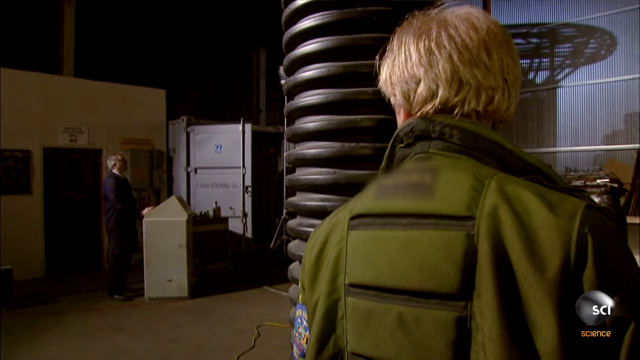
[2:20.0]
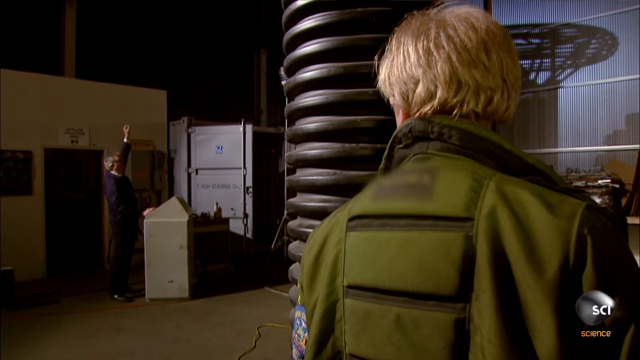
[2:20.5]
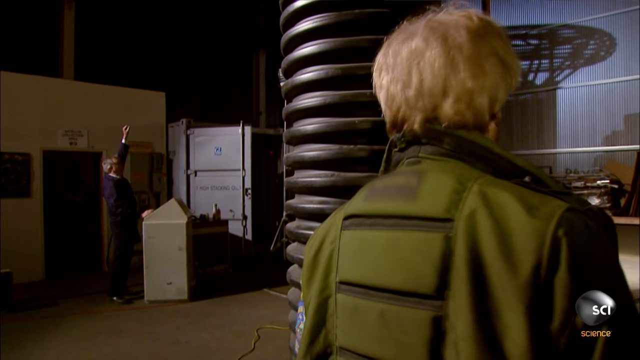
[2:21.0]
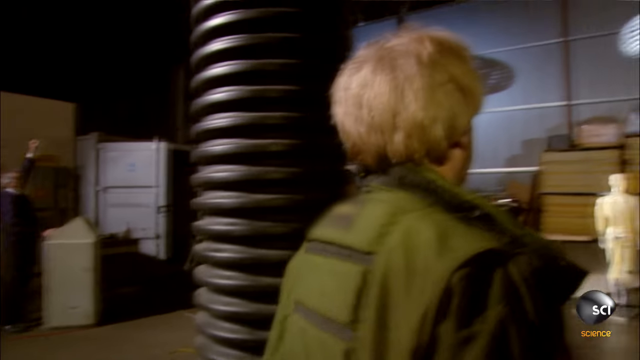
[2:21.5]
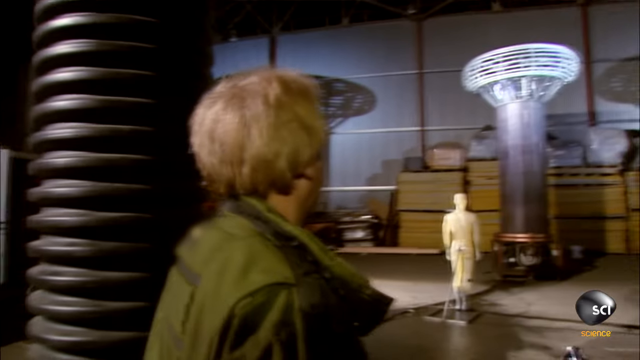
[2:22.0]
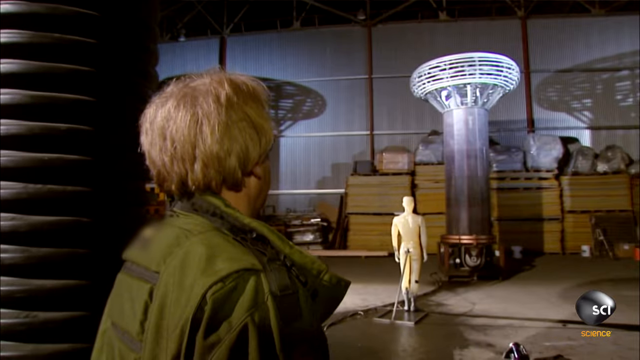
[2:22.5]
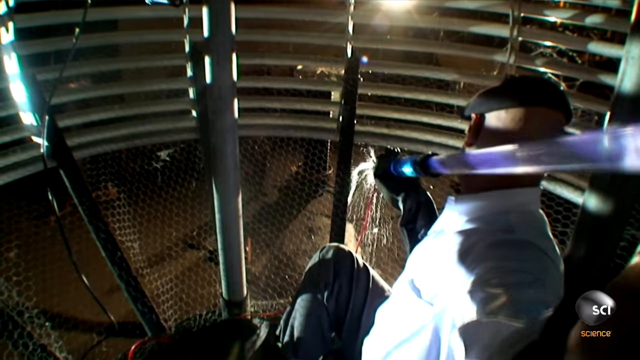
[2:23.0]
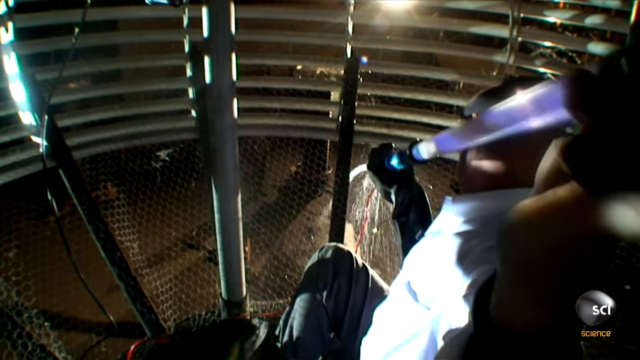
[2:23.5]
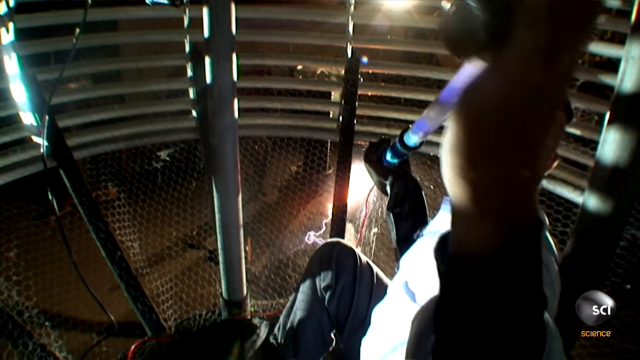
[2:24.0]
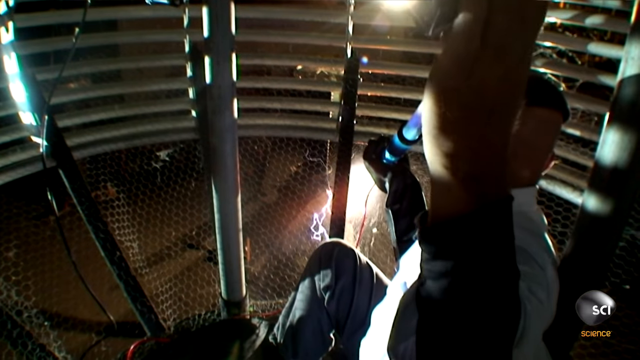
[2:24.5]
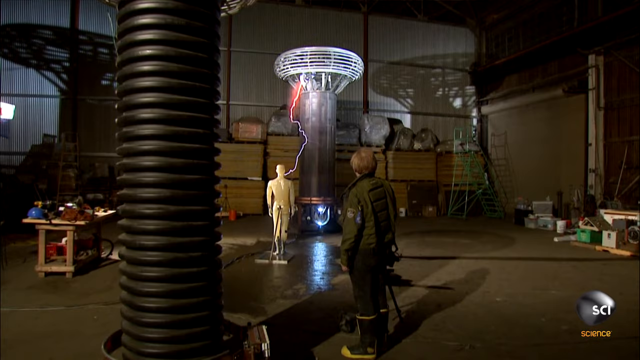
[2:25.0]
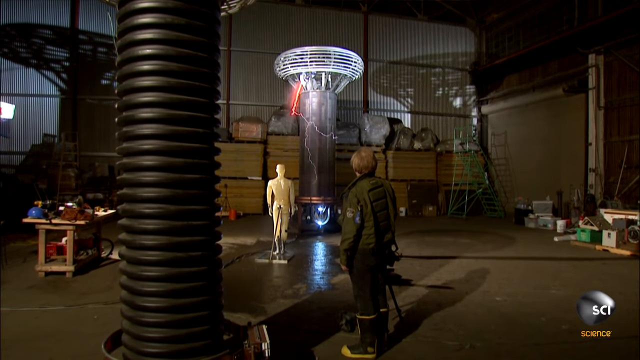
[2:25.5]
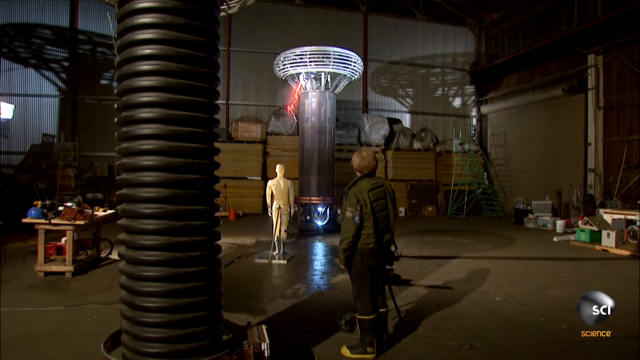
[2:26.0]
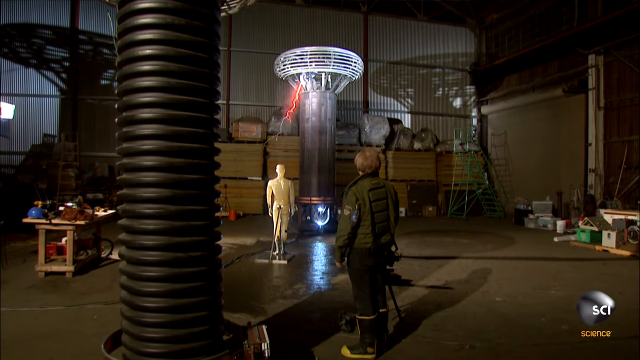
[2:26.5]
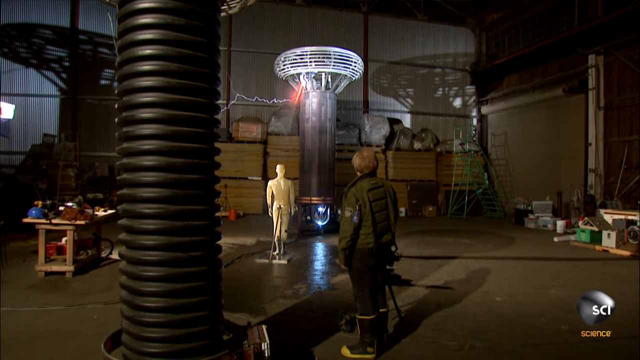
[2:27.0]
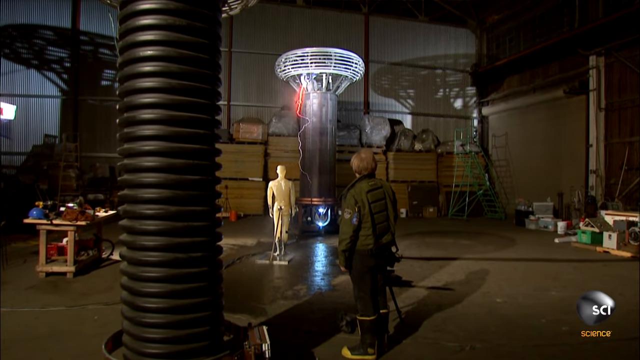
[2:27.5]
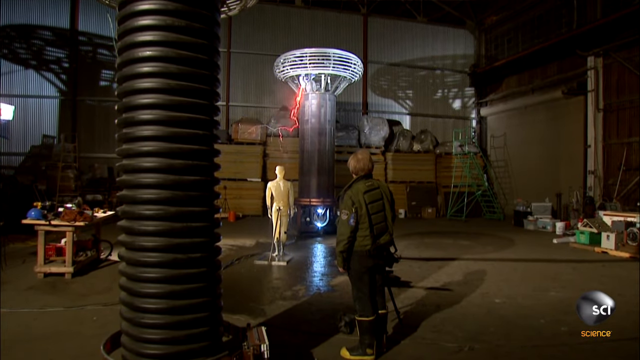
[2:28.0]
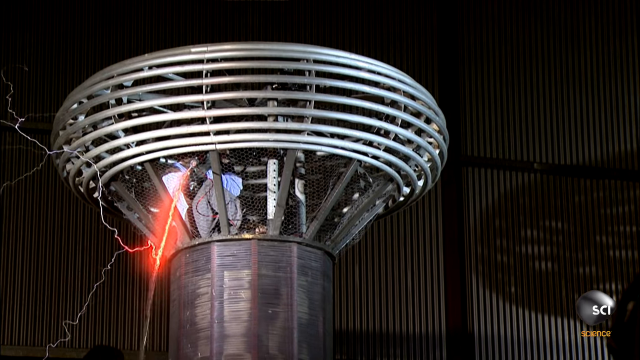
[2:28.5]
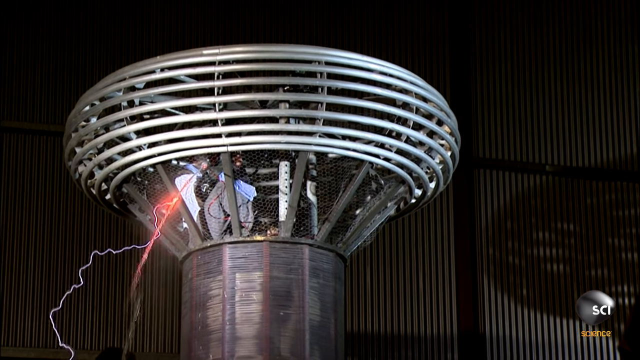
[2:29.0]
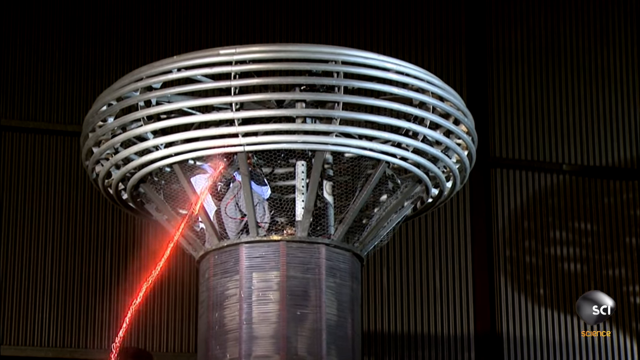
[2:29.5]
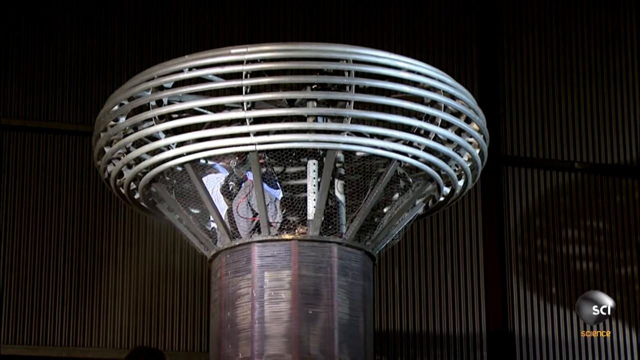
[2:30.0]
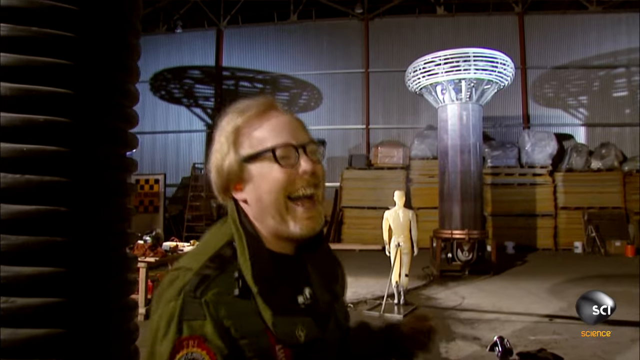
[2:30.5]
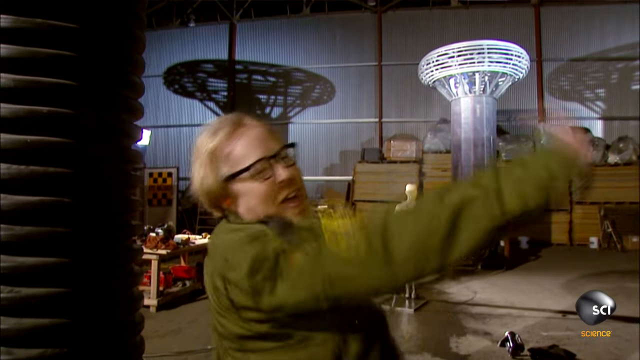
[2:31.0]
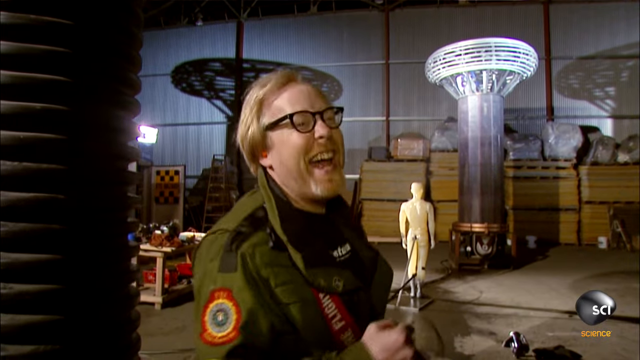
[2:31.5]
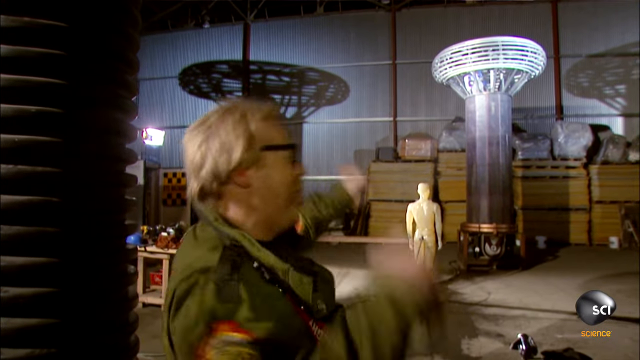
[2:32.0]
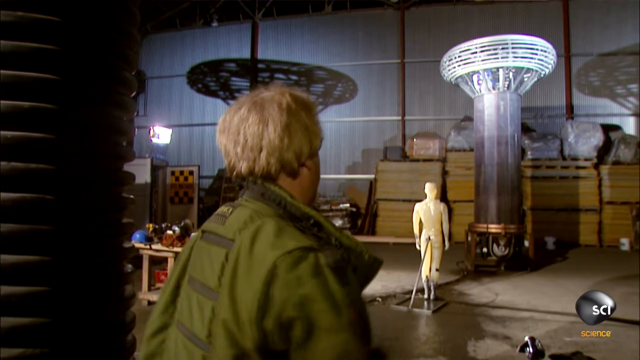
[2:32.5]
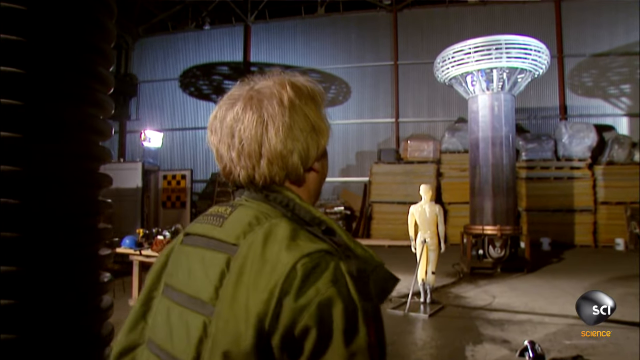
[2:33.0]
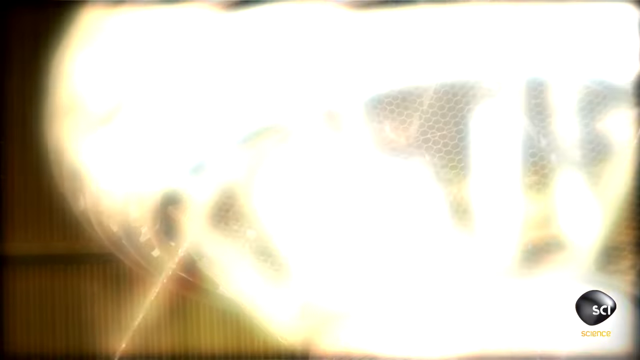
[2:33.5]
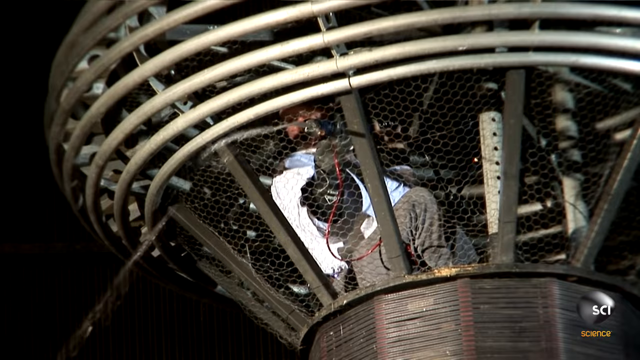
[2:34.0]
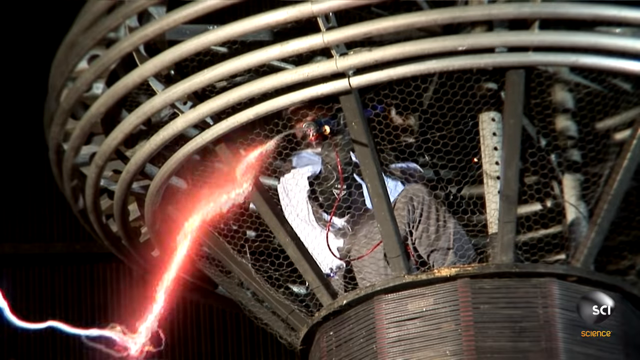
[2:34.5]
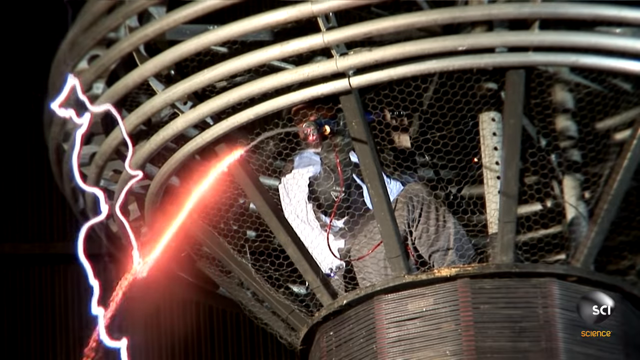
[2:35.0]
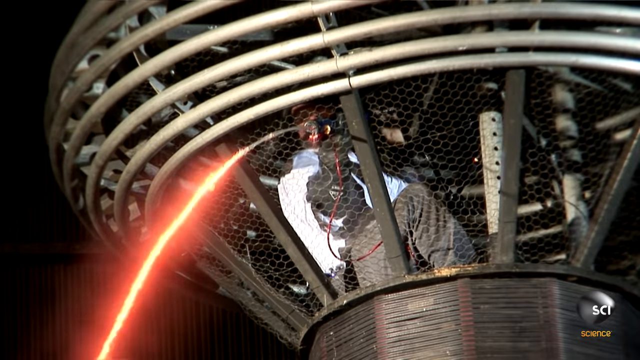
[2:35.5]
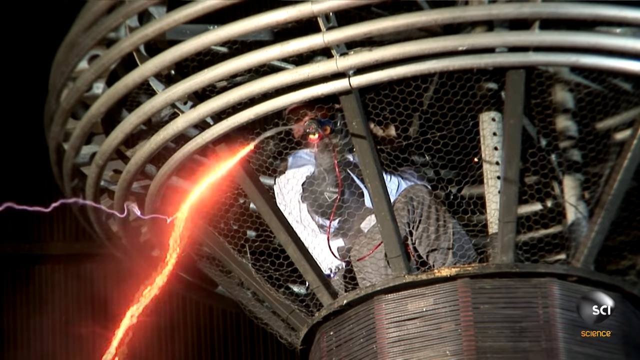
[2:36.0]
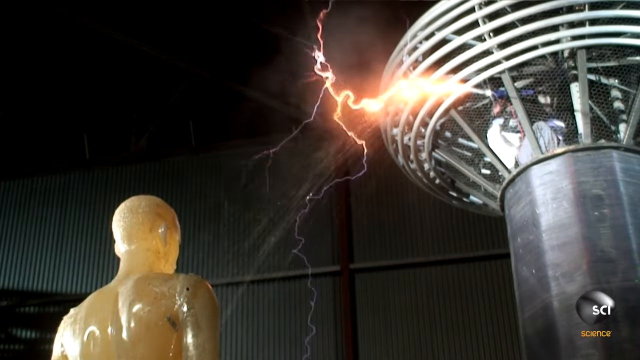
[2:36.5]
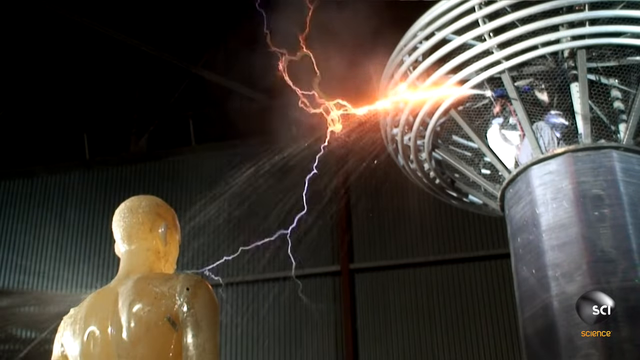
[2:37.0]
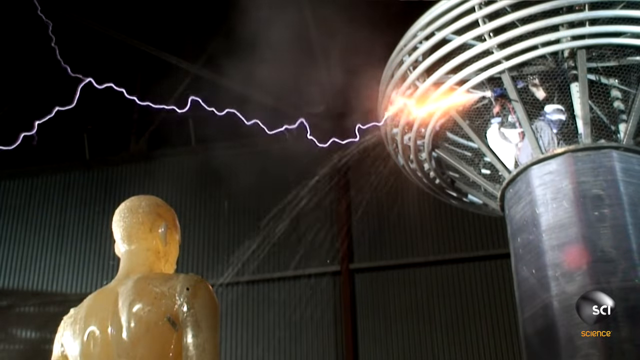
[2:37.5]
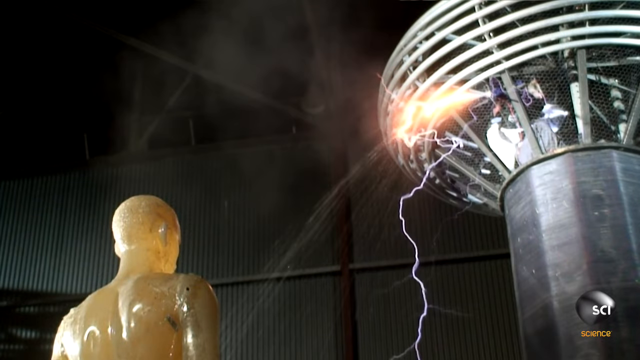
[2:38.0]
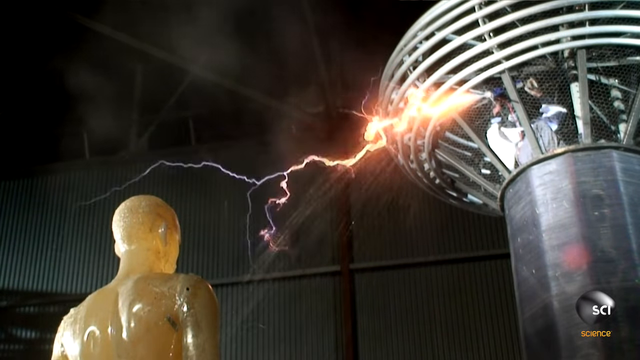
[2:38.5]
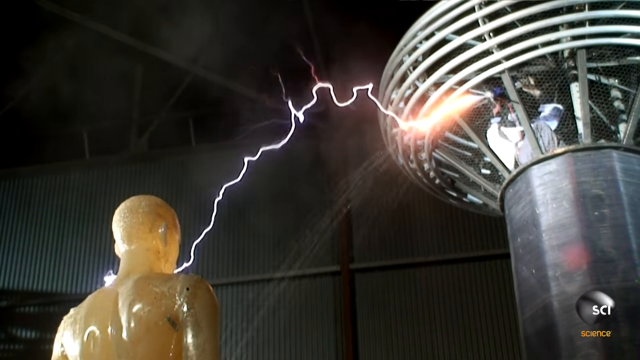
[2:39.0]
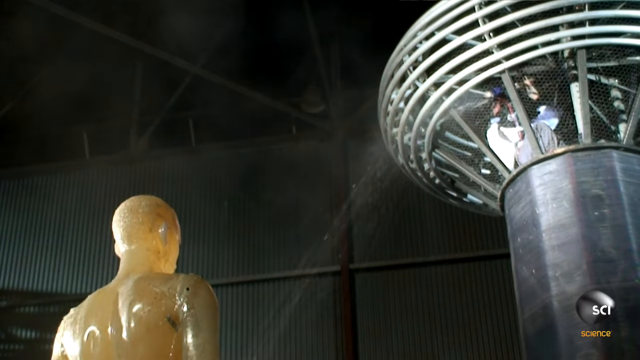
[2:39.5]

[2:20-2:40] The younger man is standing, and to his far left is another man in a purple outfit with whiter hair, in front of some type of machine; he is presumably controlling the Tesla coil. He raises his left hand, apparently signalling that he is ready. Jamie shoots a stream of water toward the mannequin, and the stream looks red, like fire, instead of like water. The younger man is very excited and smiles. Lots of red comes from the squirt gun, and Jamie kind of punches with his right hand in celebration. The moment is then shown again in slow motion.